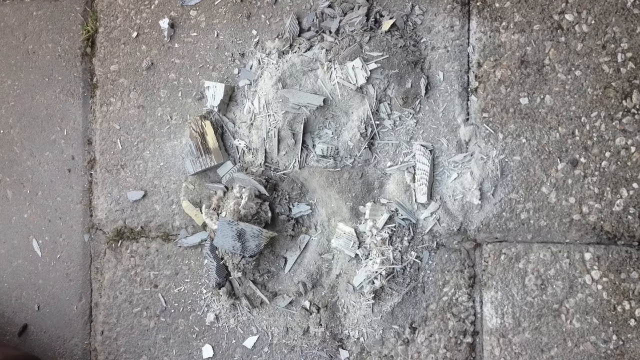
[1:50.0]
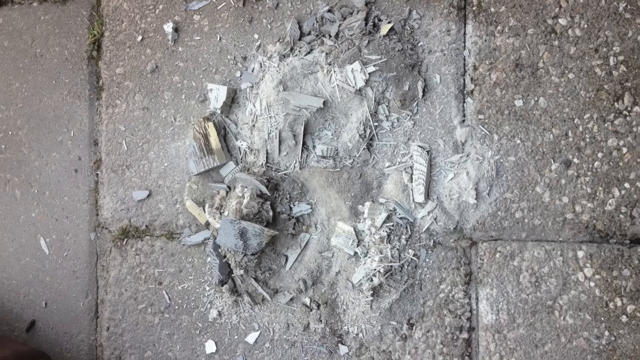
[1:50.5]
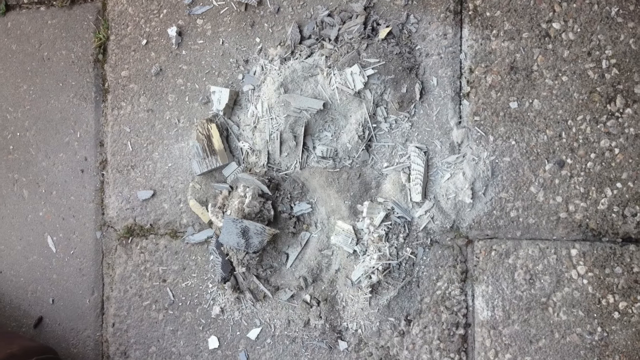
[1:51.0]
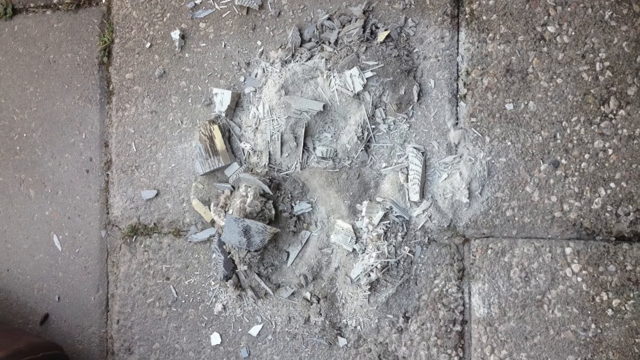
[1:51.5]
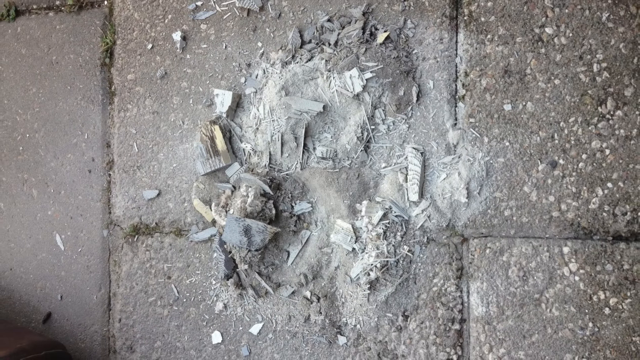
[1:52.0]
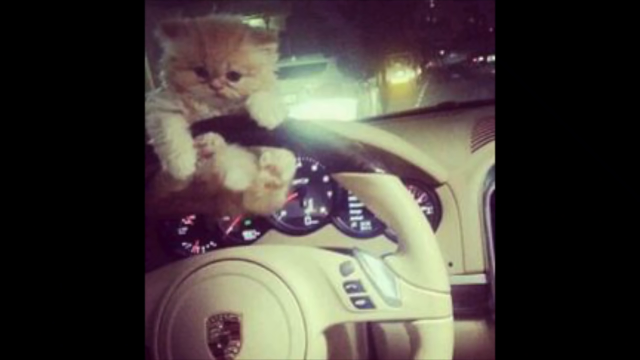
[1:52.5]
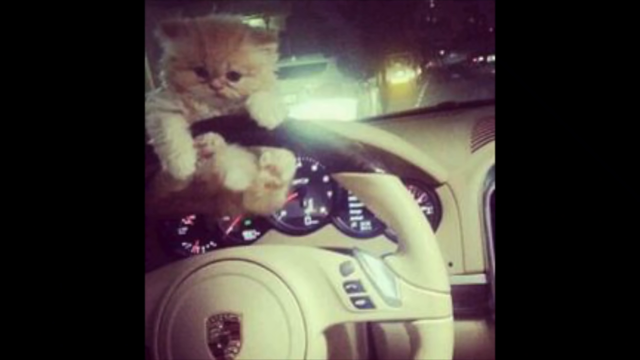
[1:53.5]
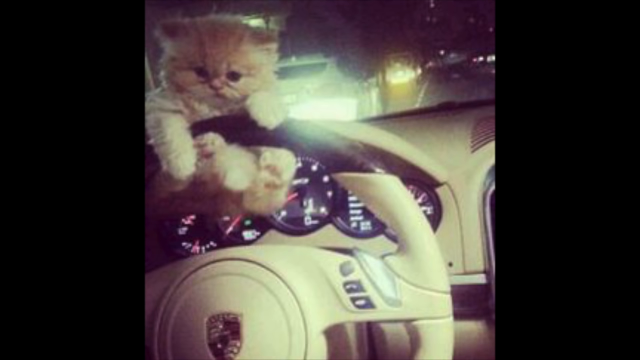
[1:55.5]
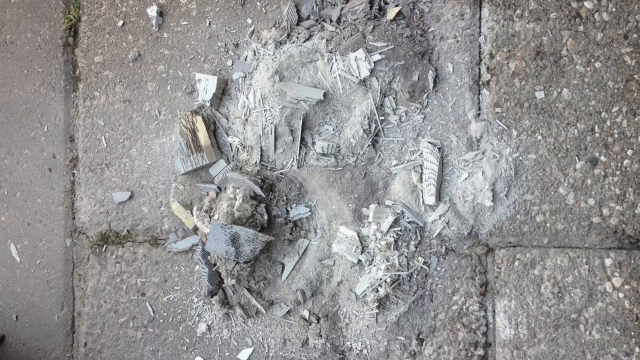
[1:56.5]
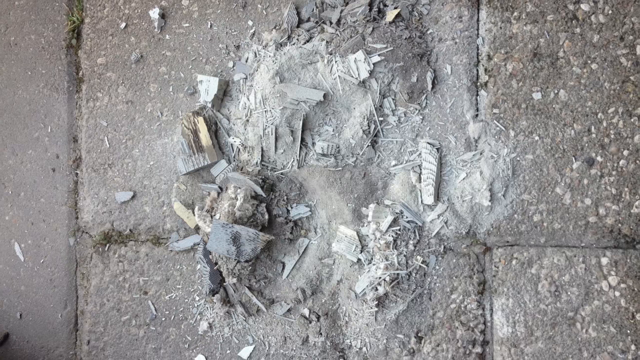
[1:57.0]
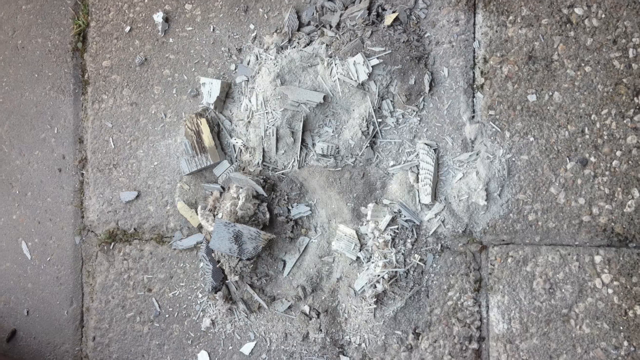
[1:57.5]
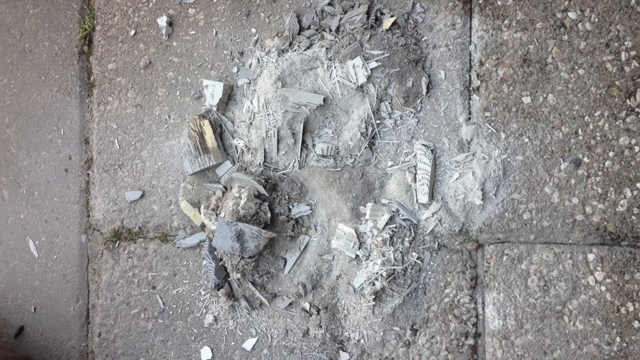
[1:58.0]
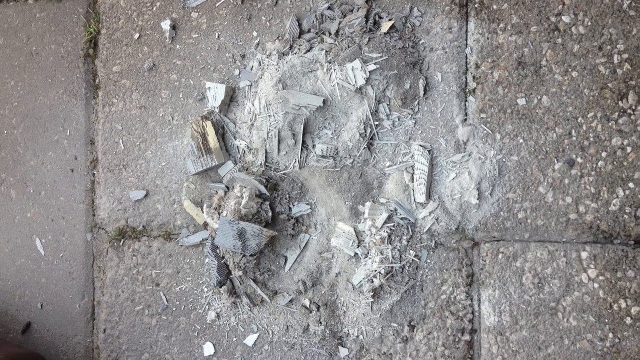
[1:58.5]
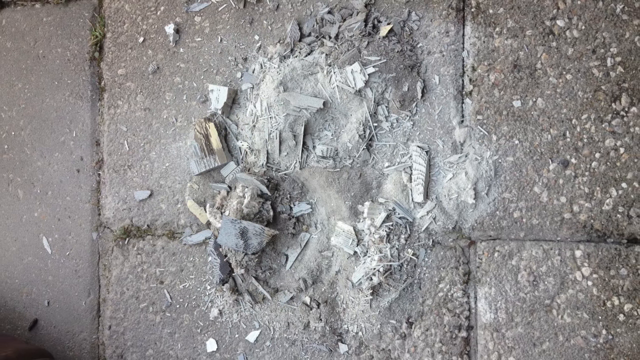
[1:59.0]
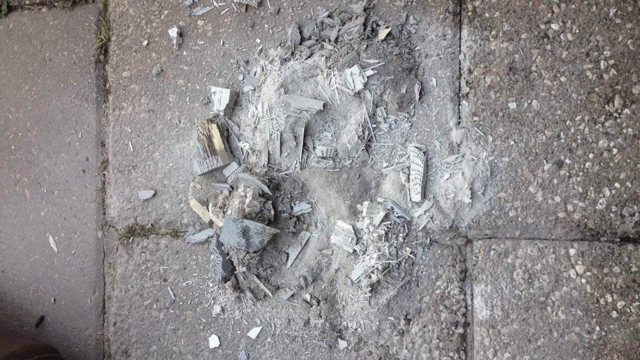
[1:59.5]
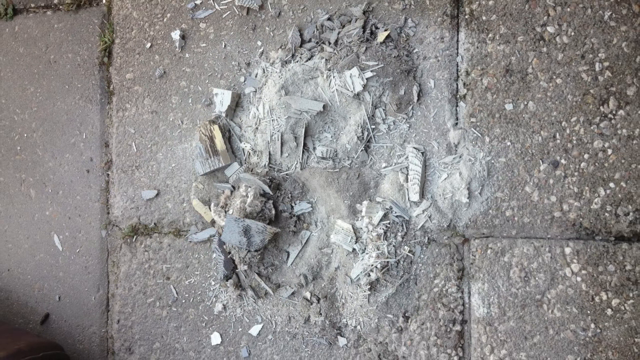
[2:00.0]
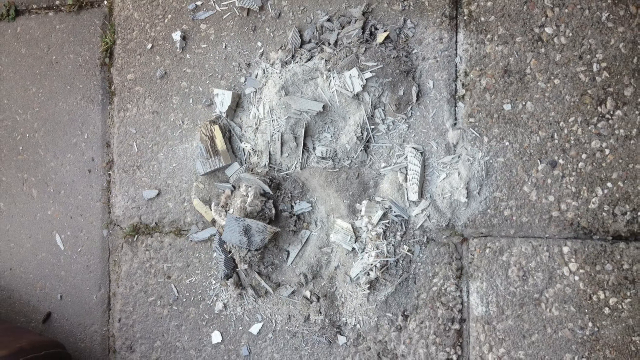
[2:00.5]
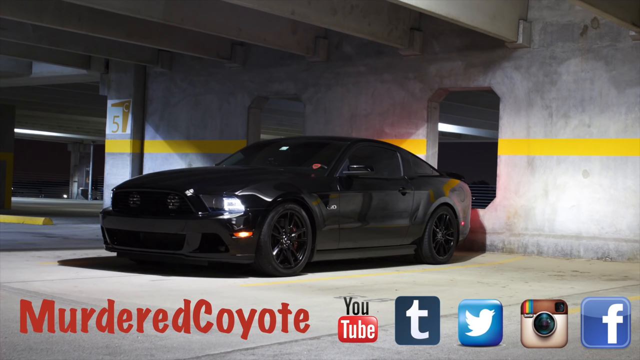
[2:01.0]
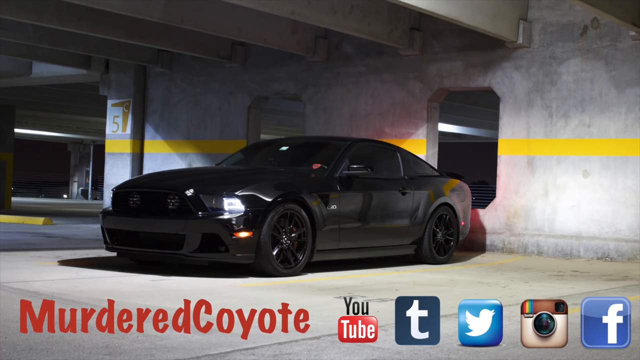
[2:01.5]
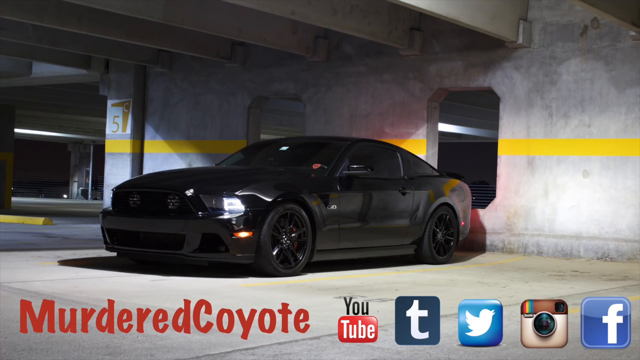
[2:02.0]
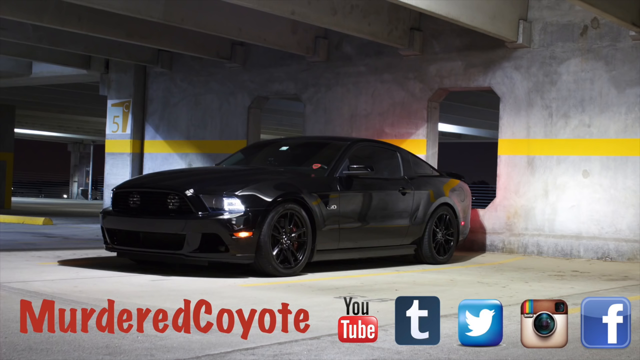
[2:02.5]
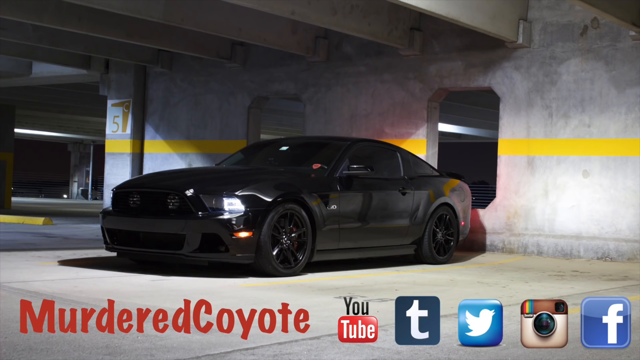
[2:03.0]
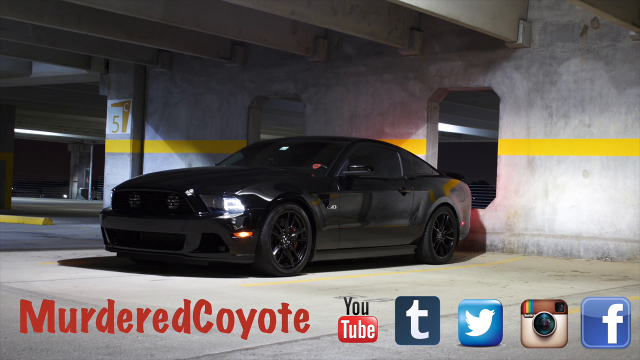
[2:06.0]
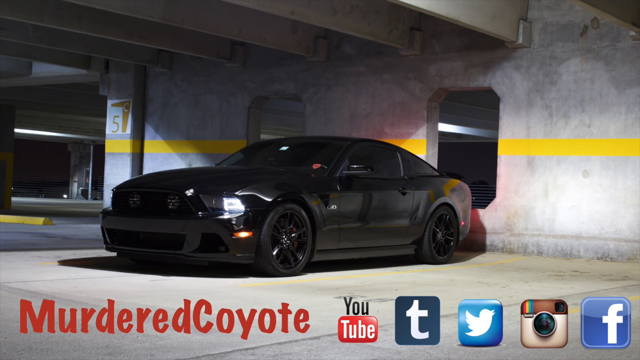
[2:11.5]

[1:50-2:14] A pile of debris lies on the ground. A cat hangs on the top of a steering wheel; the wheel is a white color and the part the cat is on is black. The front windshield is visible, with a bright light coming through it. The debris appears again; it is not a uniform pile but parts blown out of the tailpipe that have landed in a pile. They rest on gray interlocking brick, with a little grass within the bricks in the line. The words "murdered coyote" appear along with YouTube, Twitter, Instagram and Facebook, and the car is parked in a parking garage, backed up into a wall.